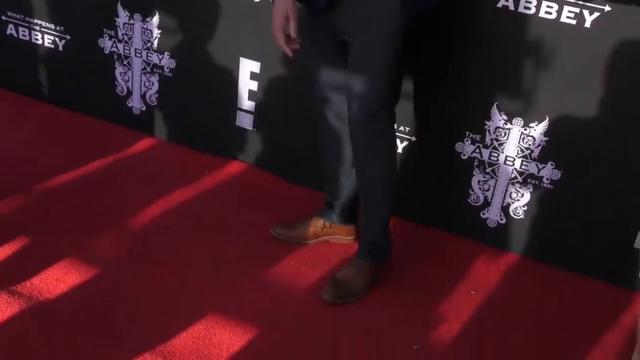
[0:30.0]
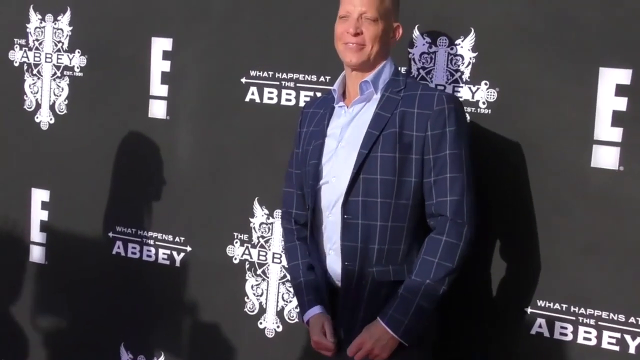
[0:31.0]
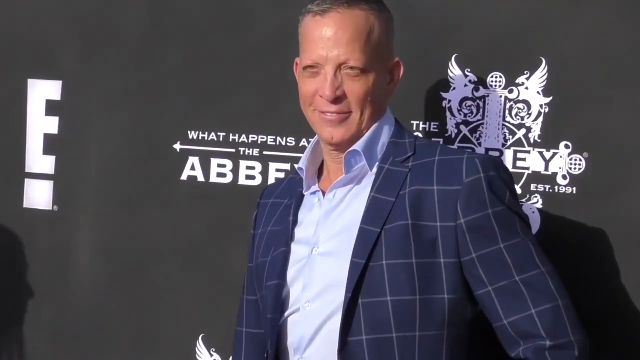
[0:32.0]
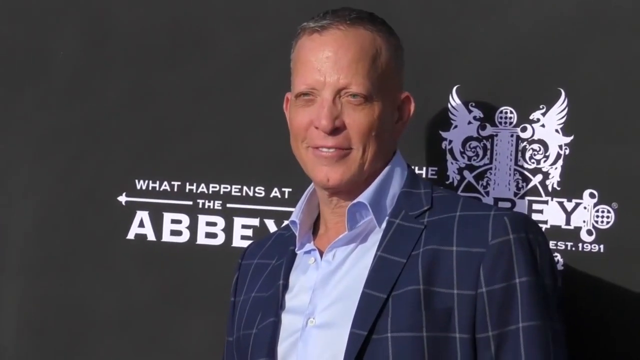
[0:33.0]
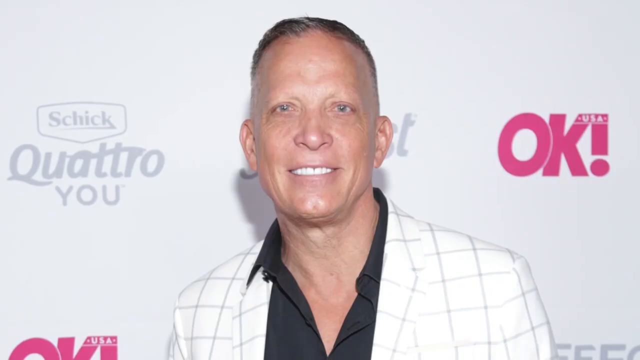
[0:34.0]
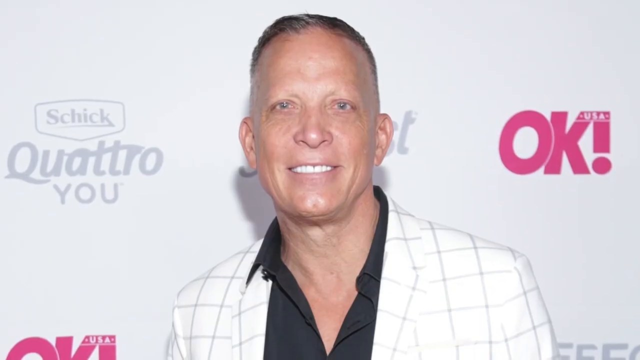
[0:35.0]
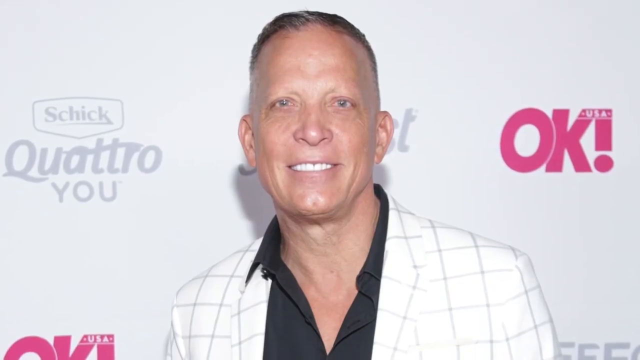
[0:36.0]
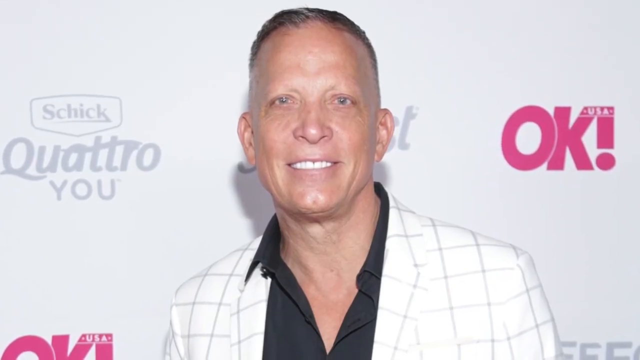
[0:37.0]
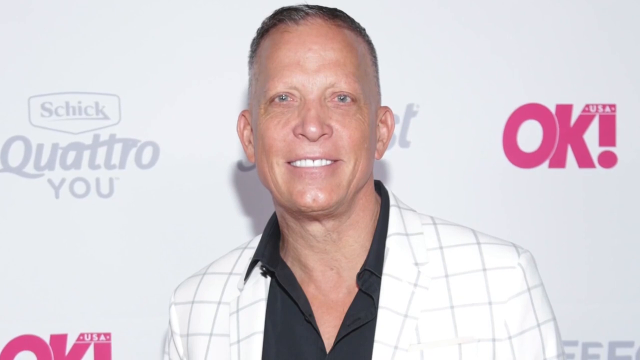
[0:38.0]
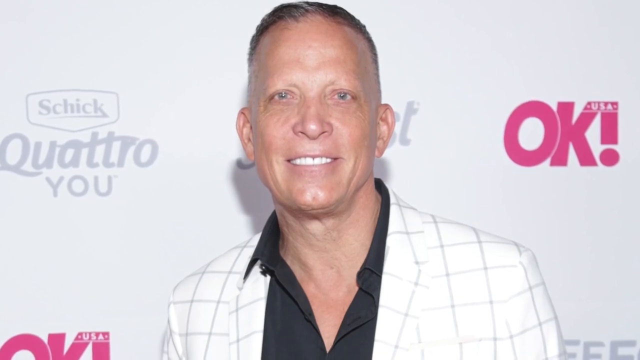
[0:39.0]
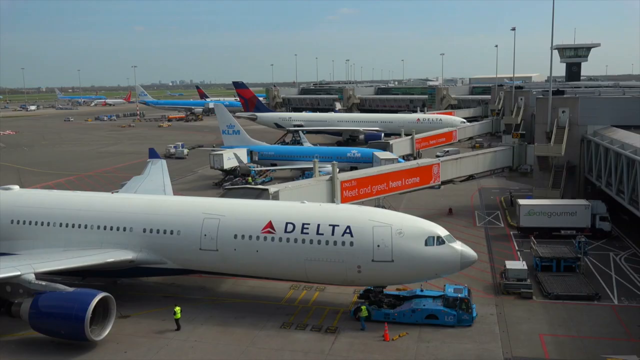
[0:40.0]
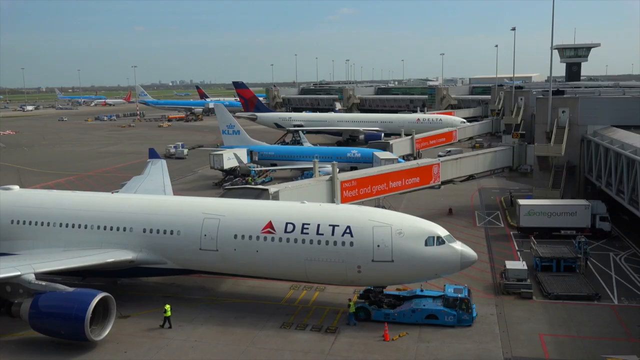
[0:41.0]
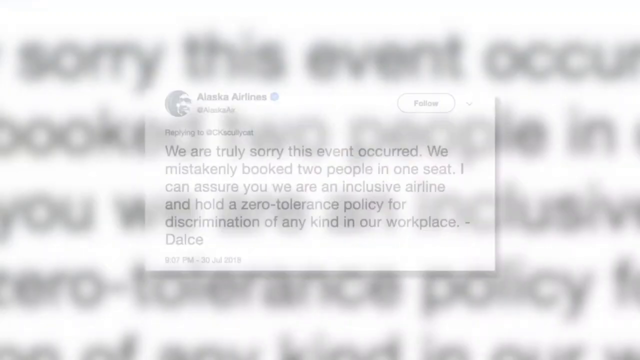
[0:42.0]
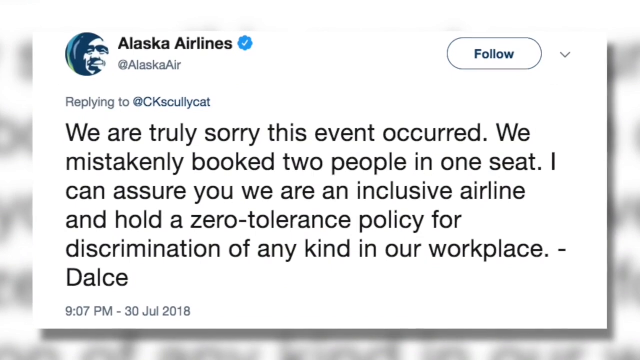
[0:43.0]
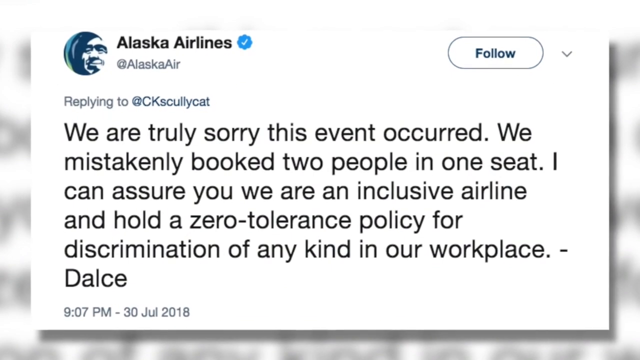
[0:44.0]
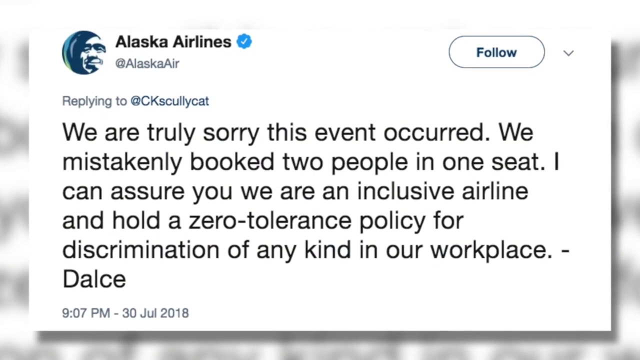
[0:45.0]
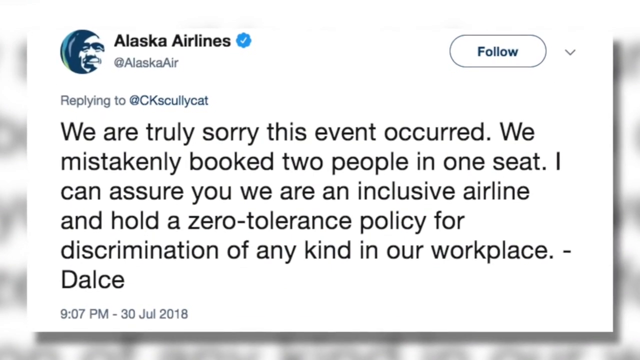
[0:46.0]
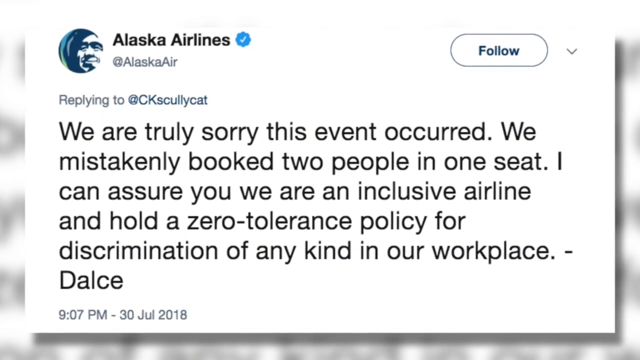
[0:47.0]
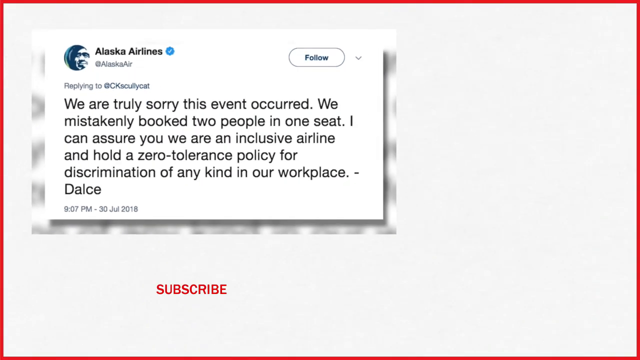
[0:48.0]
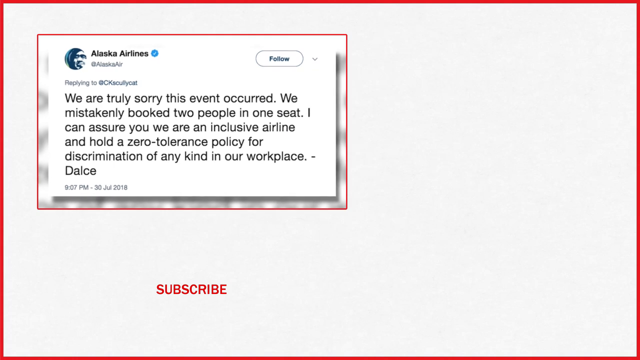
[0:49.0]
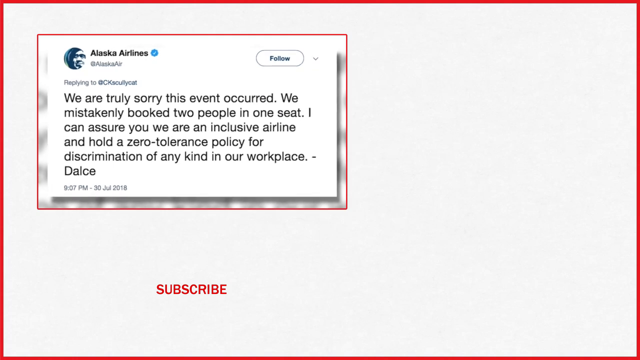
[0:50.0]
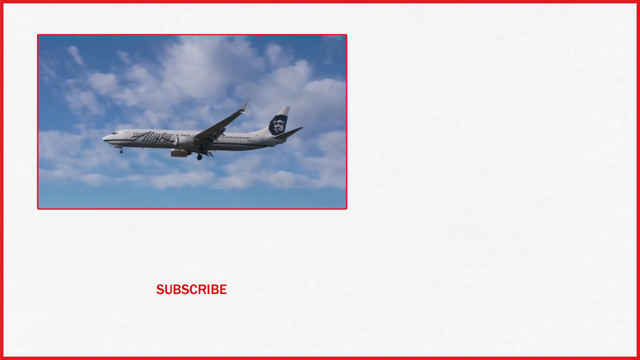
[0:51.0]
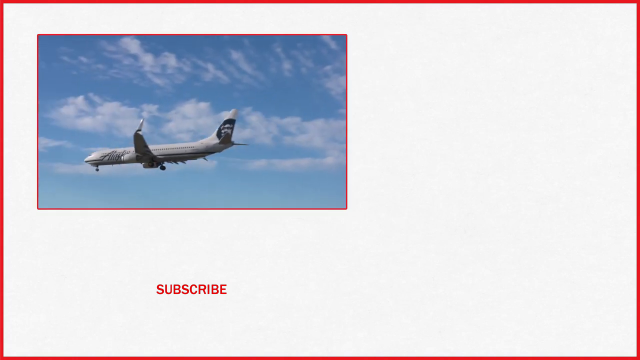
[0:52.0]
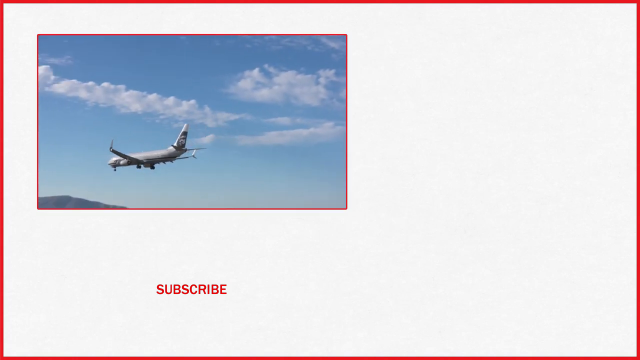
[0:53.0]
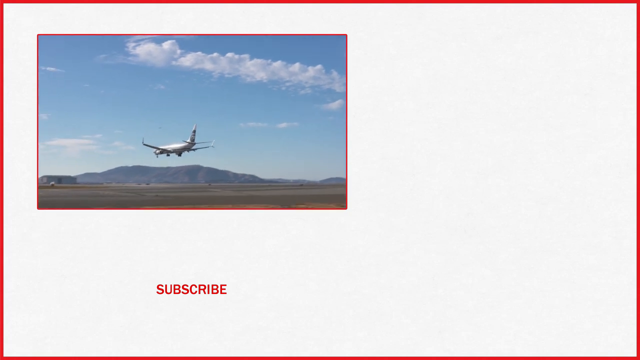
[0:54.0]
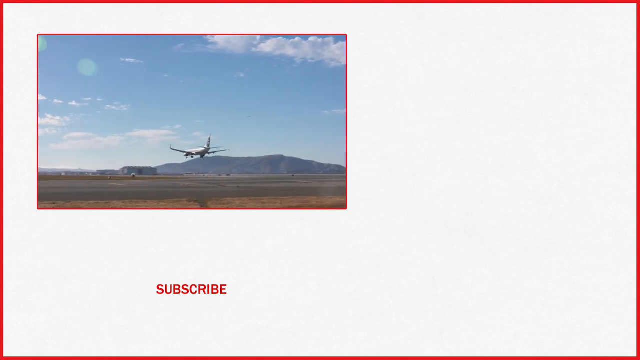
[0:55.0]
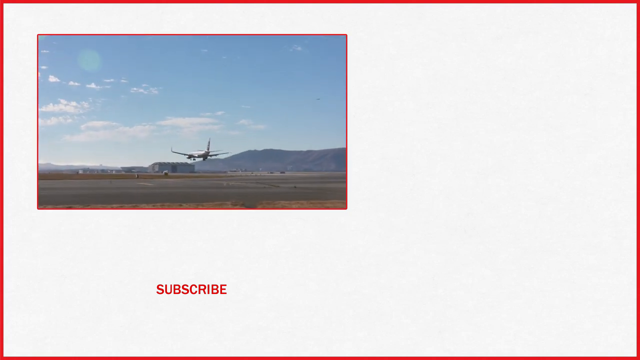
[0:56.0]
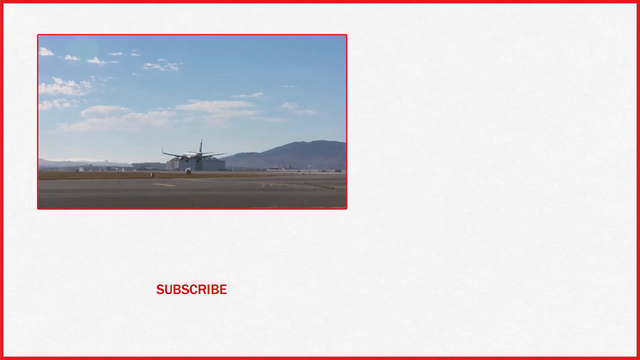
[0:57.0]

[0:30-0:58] A man in a blue boxed suit and a light blue shirt, with short black hair, stands in front of the camera smiling, in front of a big black poster. The scene changes to the same man wearing a black shirt and a white and black boxed suit, standing in front of a white sticker with "OK" written on it in red, smiling at the camera. Next, many aeroplanes are parked outside the airport; some are blue, some are white, and others are branded Delta, and people move around them. Text appears on the screen with Alaska Airlines apologizing for the mistreatment: "we are truly sorry this event occurred, we mistakenly booked two people in one seat, I assure you we are an inclusive airline". The scene then changes to an Alaska airline plane flying in the sky.